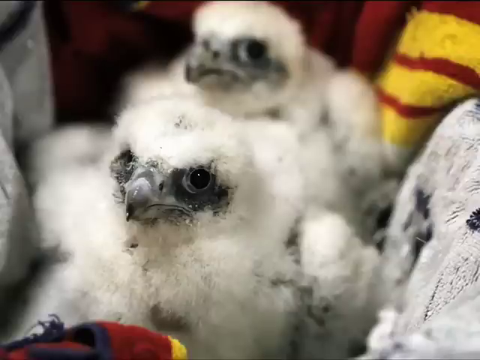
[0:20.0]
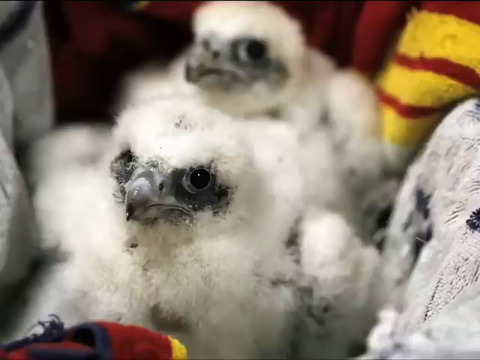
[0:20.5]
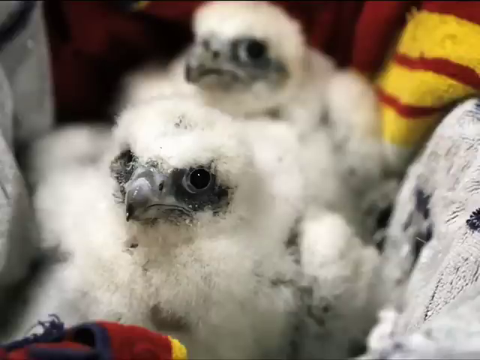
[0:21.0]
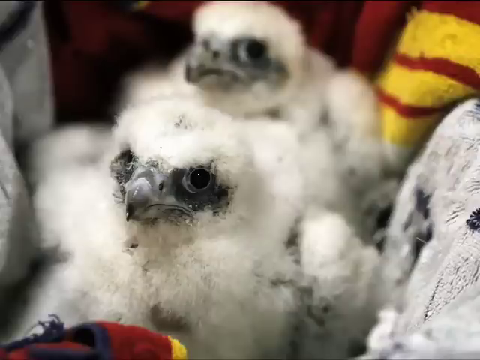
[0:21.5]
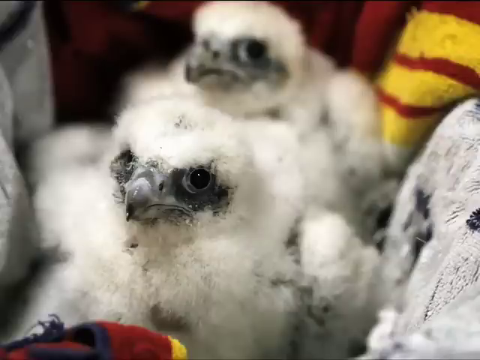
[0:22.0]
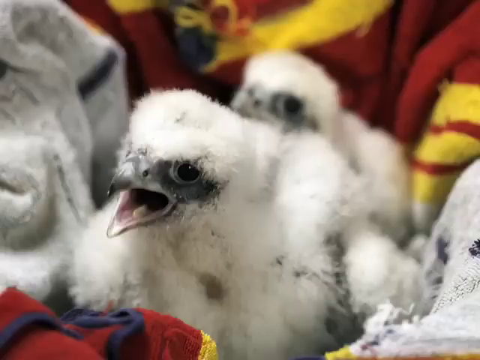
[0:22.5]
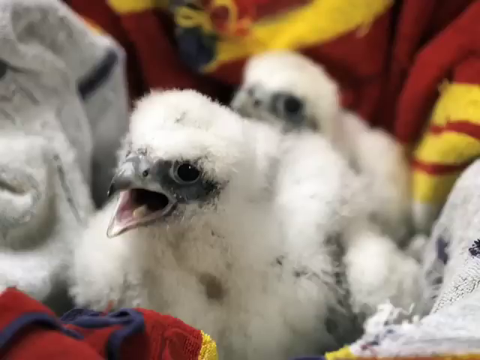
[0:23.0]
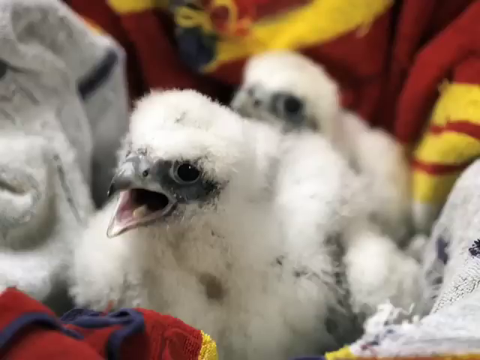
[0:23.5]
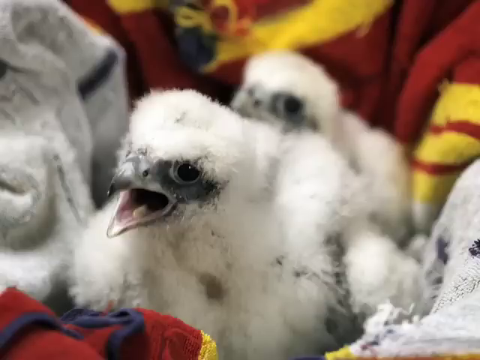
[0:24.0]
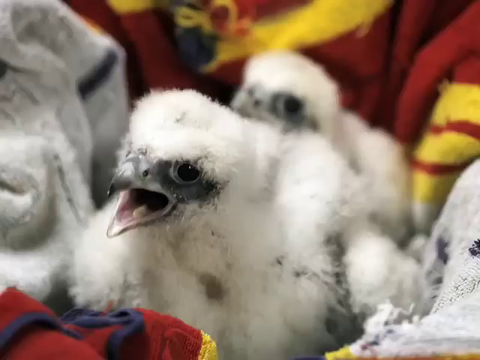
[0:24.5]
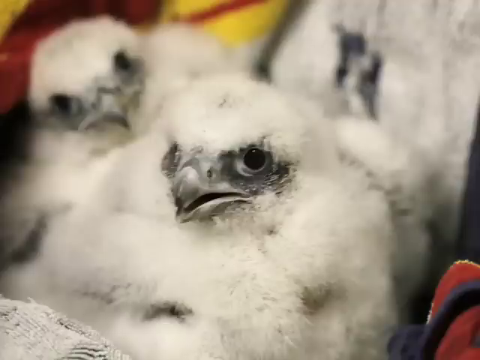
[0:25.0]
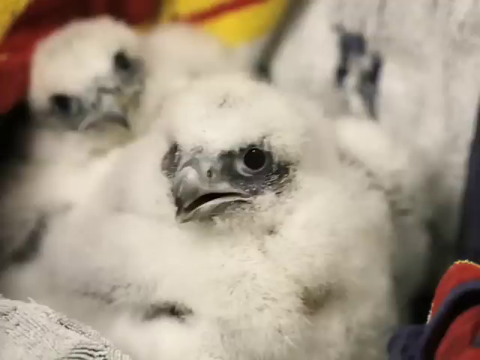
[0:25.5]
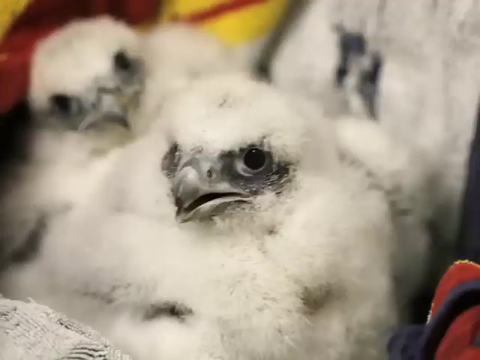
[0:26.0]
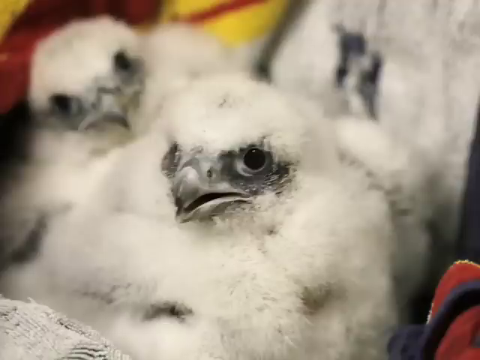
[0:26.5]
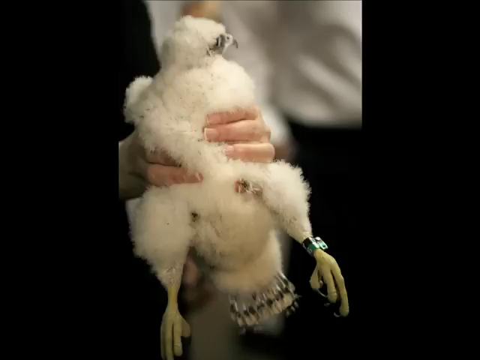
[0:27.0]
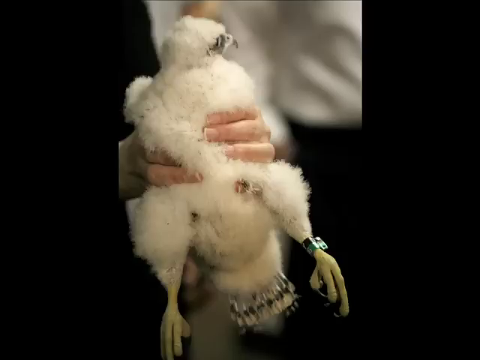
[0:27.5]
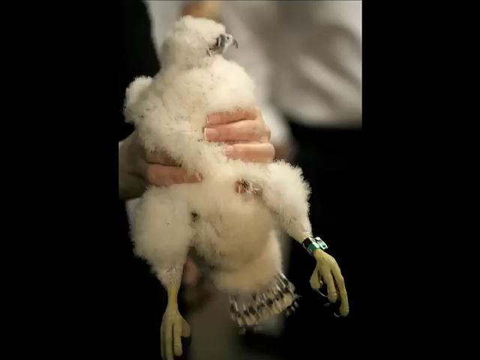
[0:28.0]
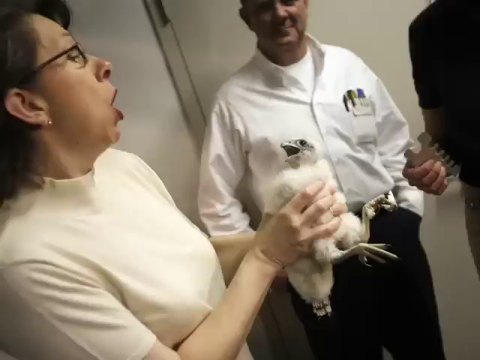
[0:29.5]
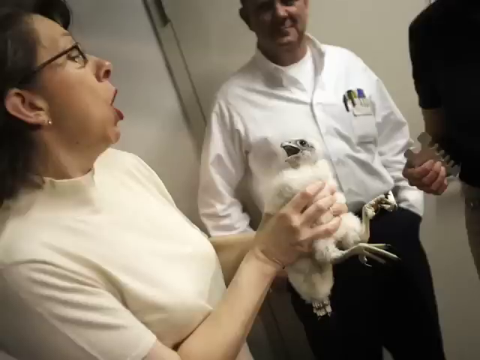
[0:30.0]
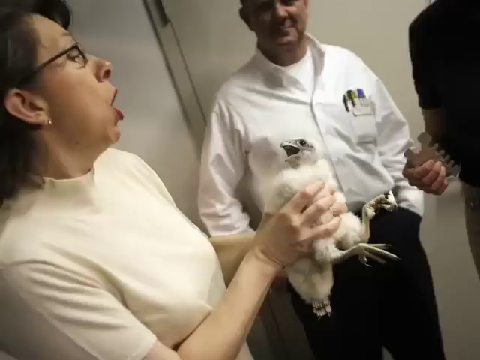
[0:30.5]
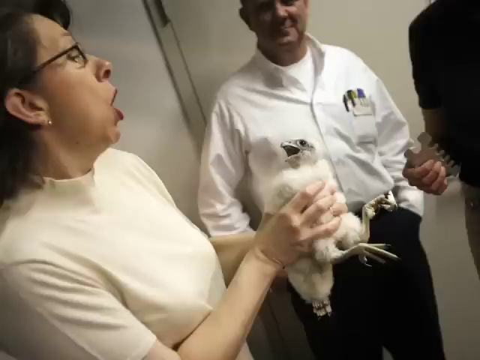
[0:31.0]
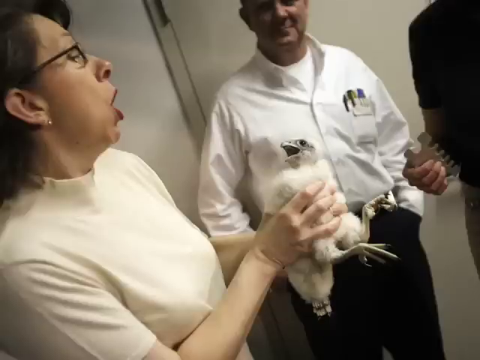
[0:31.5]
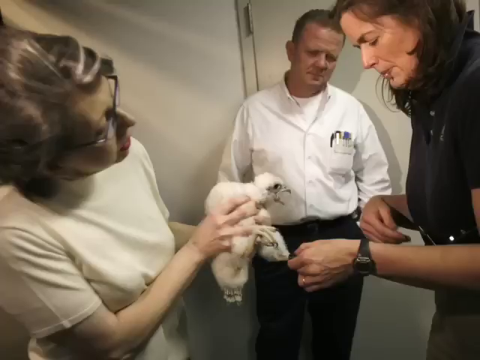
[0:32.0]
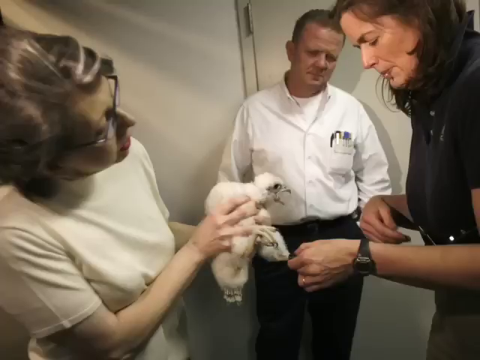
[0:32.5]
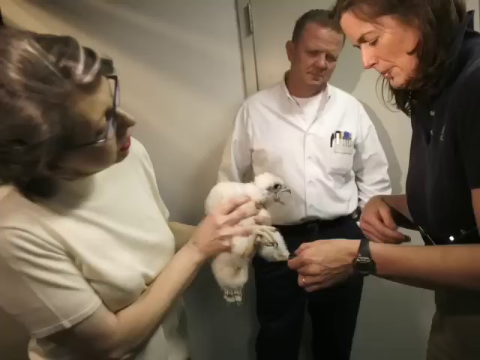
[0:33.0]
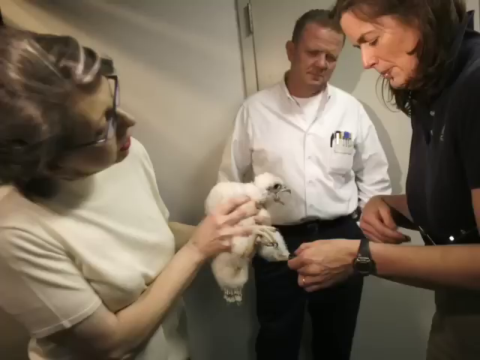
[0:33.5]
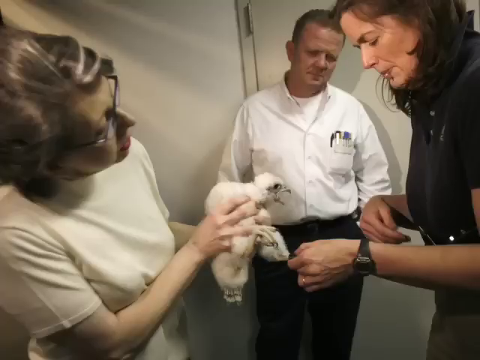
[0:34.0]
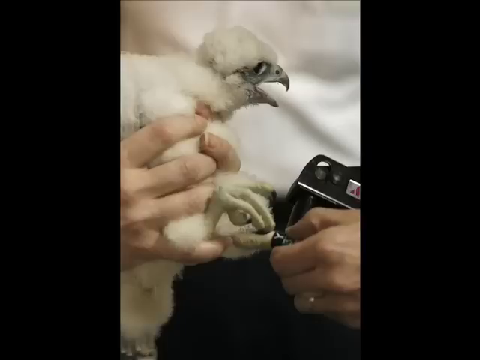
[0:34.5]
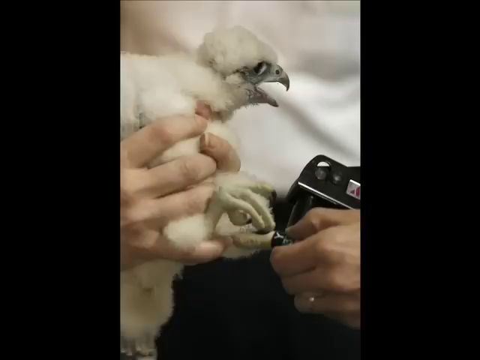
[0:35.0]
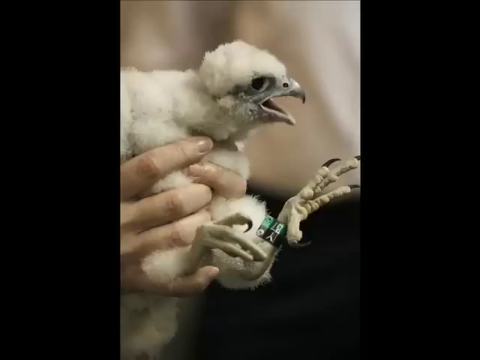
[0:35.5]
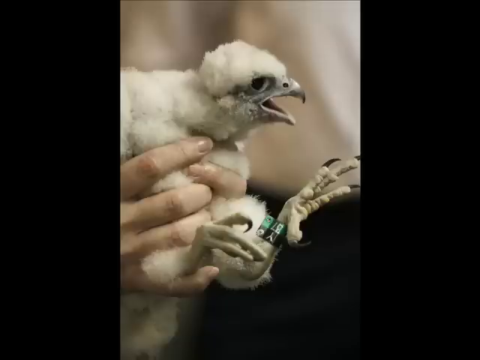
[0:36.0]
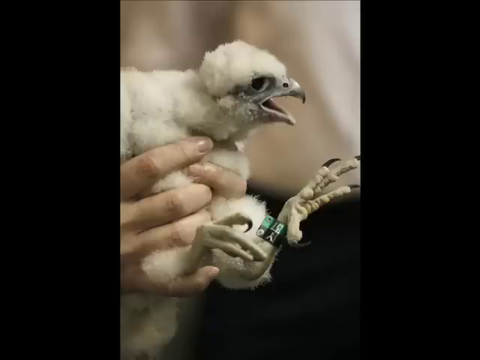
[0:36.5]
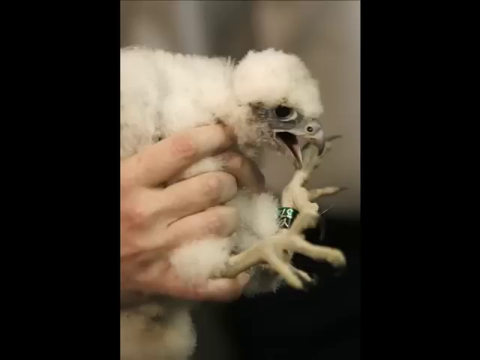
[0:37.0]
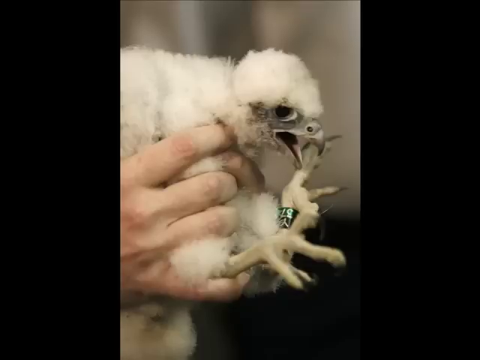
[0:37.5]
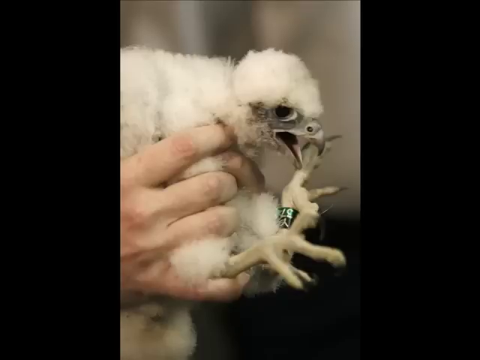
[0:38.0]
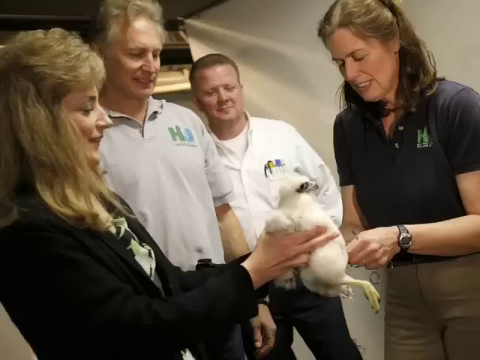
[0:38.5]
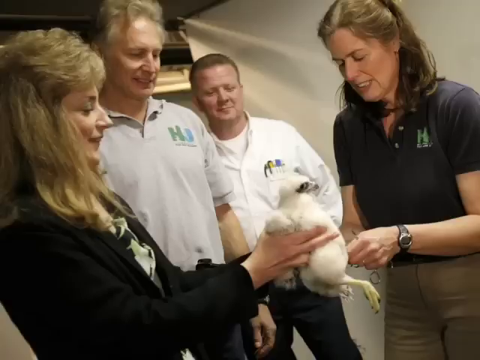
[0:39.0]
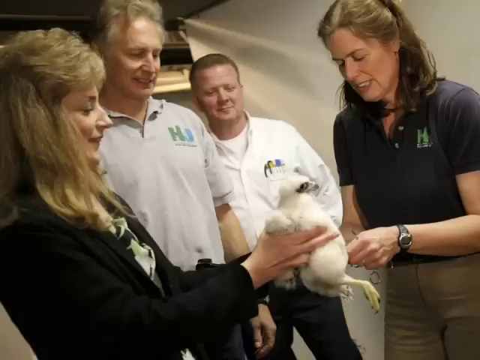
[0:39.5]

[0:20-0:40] A very close-up image shows two small falcon chicks. The first chick, at the forefront, is in focus, while the second chick behind it is slightly blurred in an almost bokeh effect. They look like they are in a basket with towels in it. Another shot shows the chick apparently squawking, with the second one just visible in the background, again slightly blurred. Another image shows the two chicks from a different angle, the front one in focus and the second slightly blurred. A pair of hands holds one of the chicks; they are white, the claws are visible, and what looks like a green and black tag has been put onto the bird's foot. A woman holds the bird, and the two look at each other; she is almost squawking at the bird while the bird squawks at her. In the background is a man in a white shirt with some pens in his pocket and black trousers, and the hand of another person is visible on the far right. Further images show them putting the tag onto the bird, with various quick images of them trying to do this.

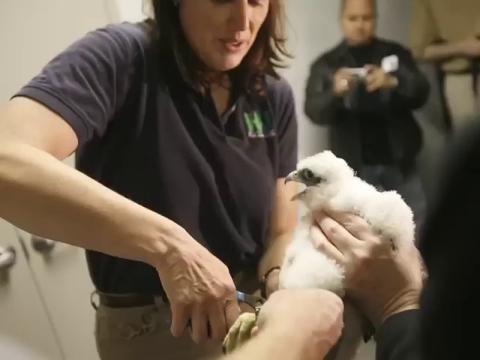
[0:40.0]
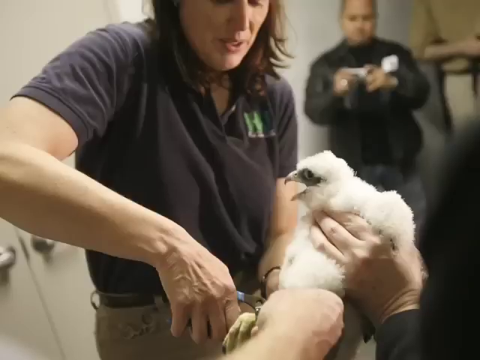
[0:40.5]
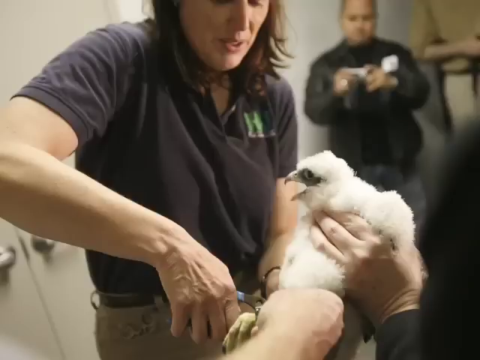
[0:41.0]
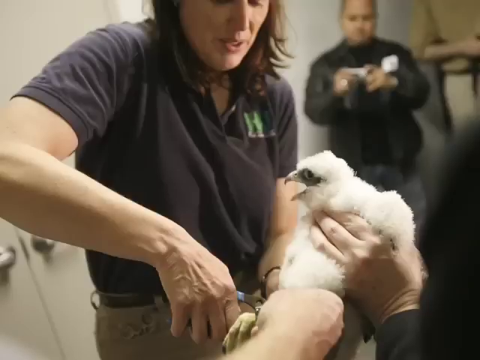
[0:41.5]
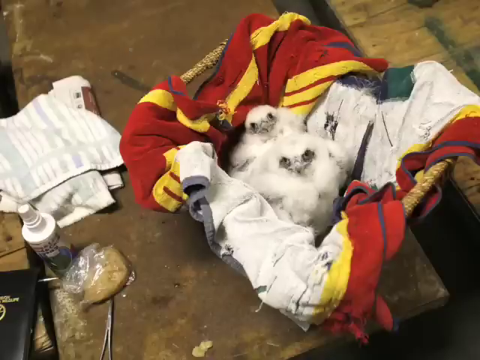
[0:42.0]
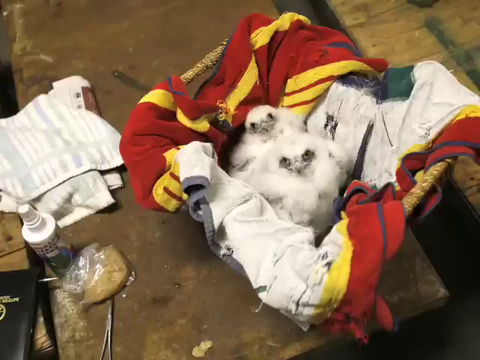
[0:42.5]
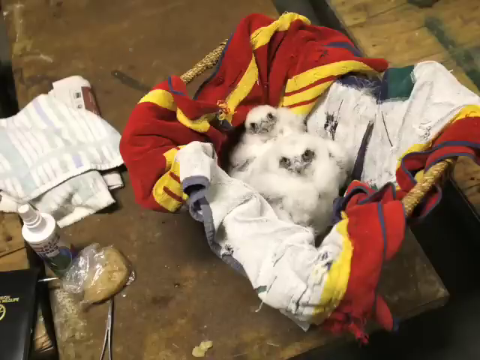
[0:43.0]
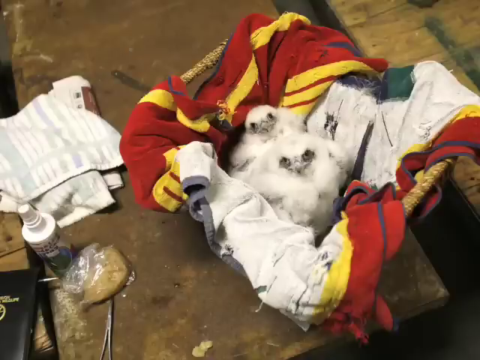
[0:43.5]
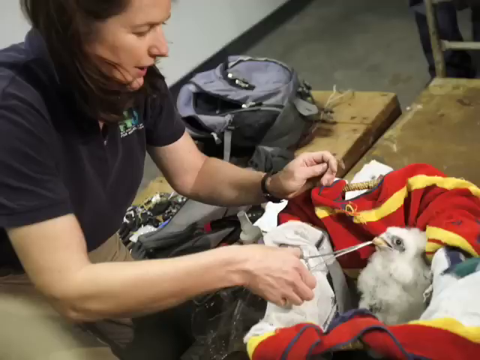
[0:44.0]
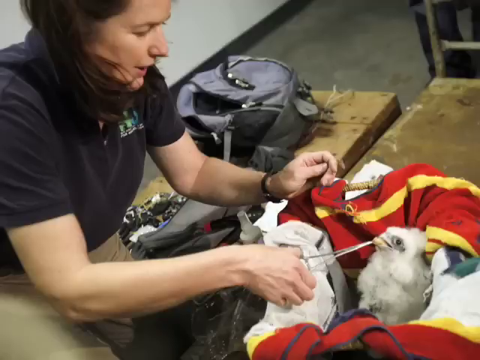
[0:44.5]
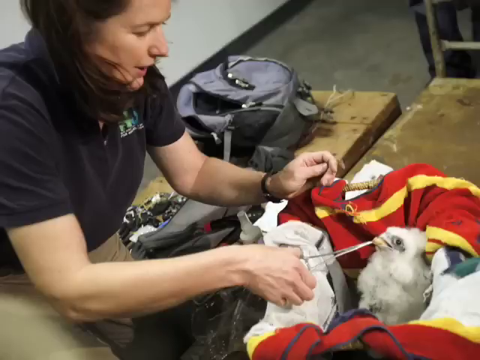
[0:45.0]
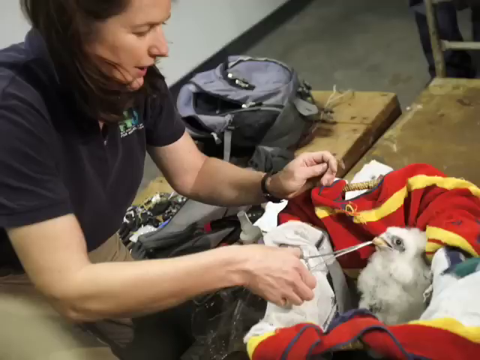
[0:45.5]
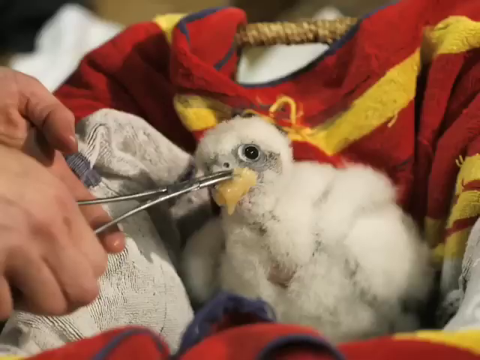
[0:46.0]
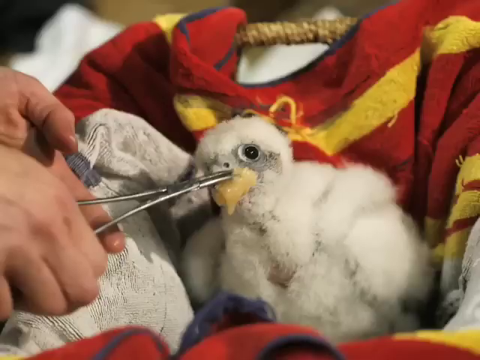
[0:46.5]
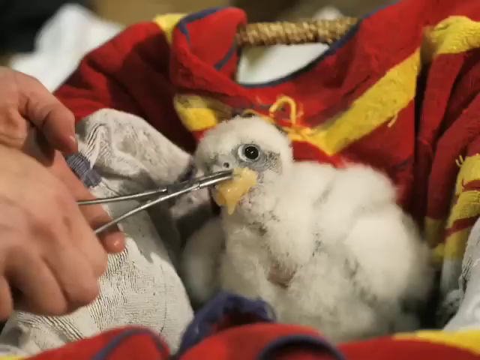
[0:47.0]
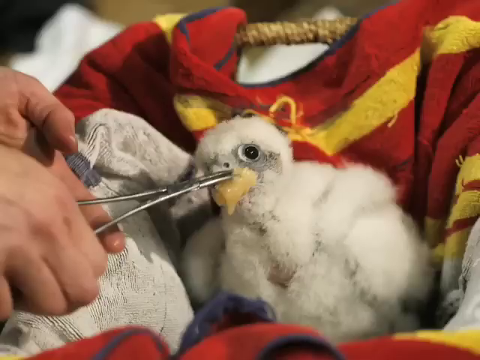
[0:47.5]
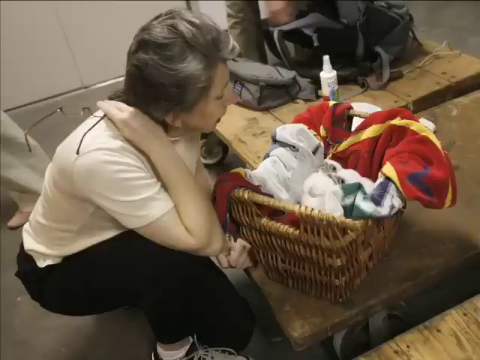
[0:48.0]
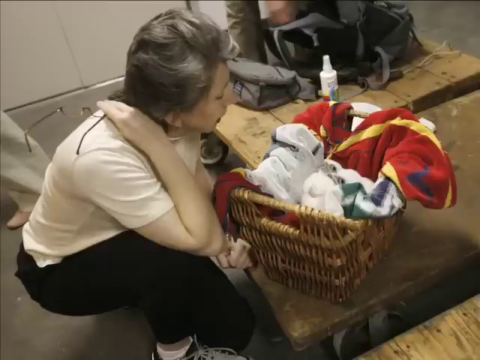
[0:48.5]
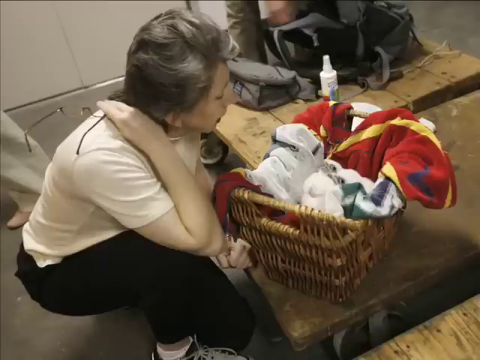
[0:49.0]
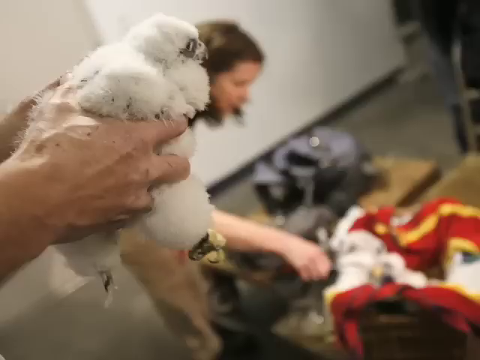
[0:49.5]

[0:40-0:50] A woman in a blue t-shirt looks like she is trying to apply one of the tags to a chick, which is held by another person whose hand is wrapped around the bird's body; in the background a man is taking some footage. Another shot shows two chicks in the basket surrounded by colourful towels, both looking directly up at the camera, with what seems to be a spray bottle on the left-hand side. A woman then appears to be feeding the bird: she holds a pair of scissors with something on the end going into the bird's mouth.